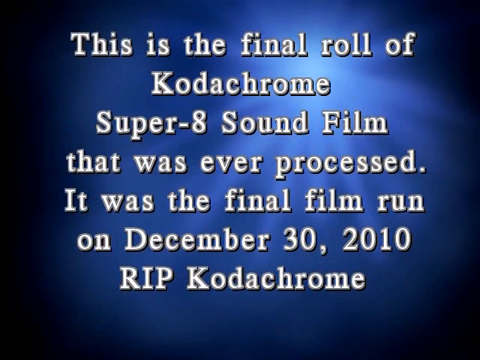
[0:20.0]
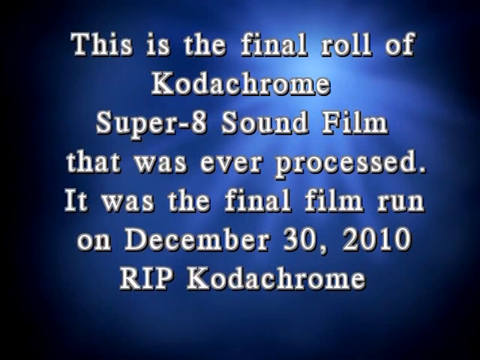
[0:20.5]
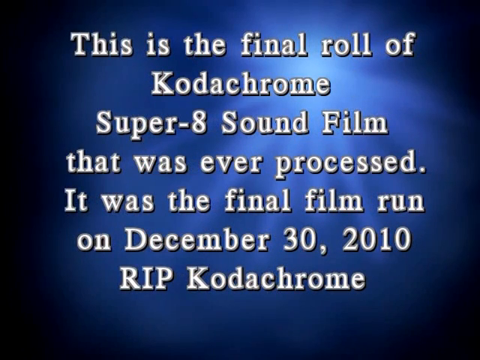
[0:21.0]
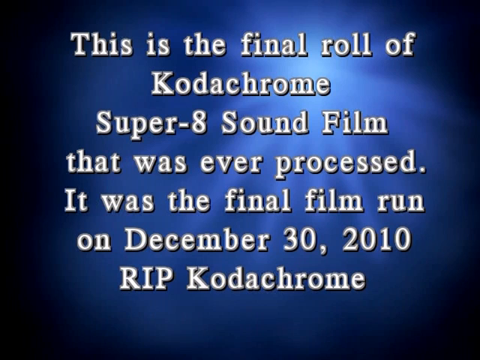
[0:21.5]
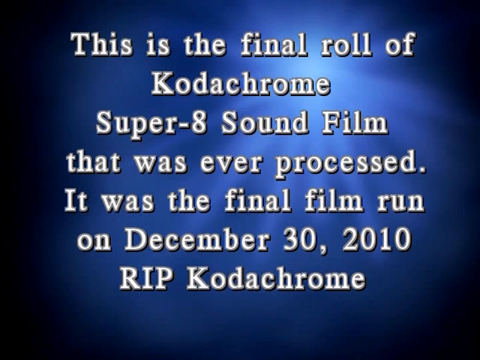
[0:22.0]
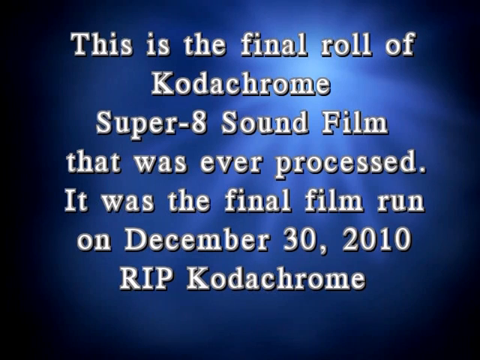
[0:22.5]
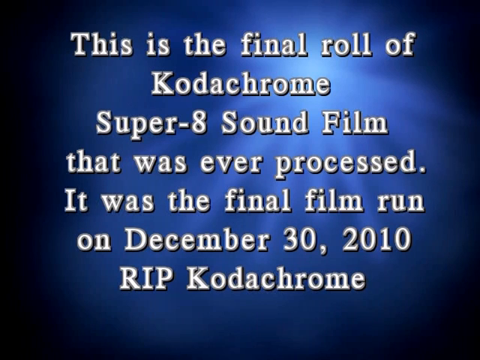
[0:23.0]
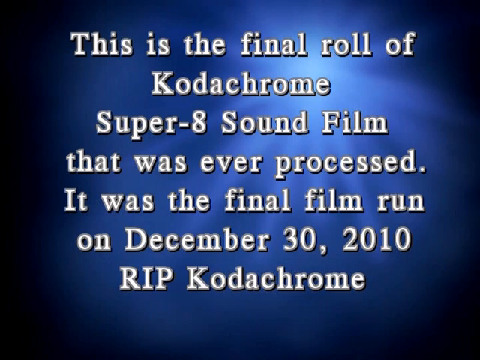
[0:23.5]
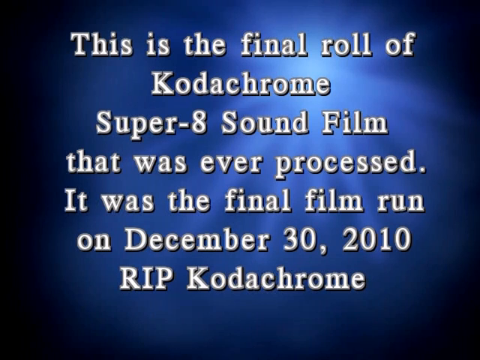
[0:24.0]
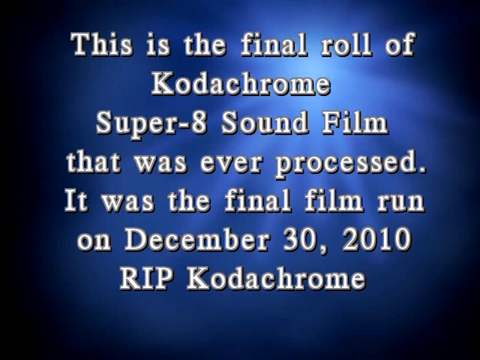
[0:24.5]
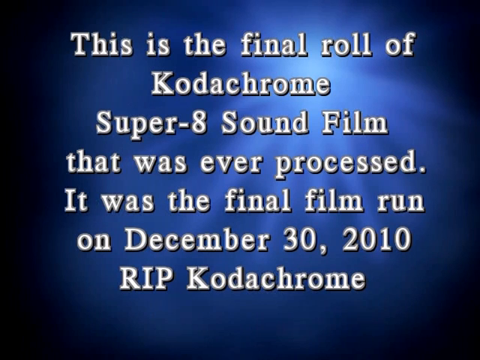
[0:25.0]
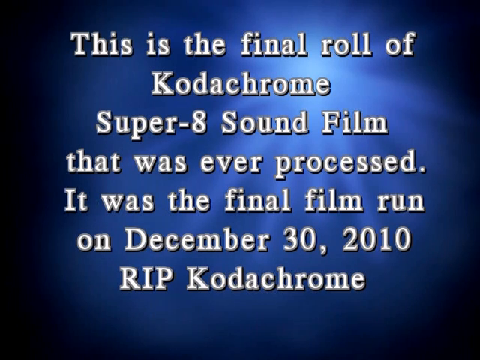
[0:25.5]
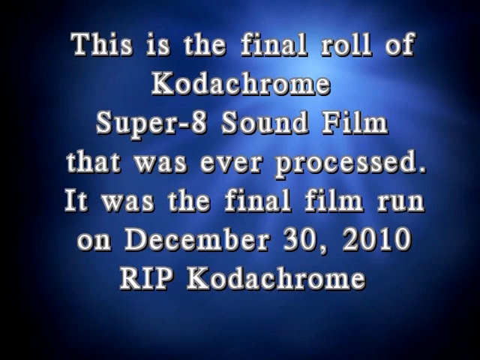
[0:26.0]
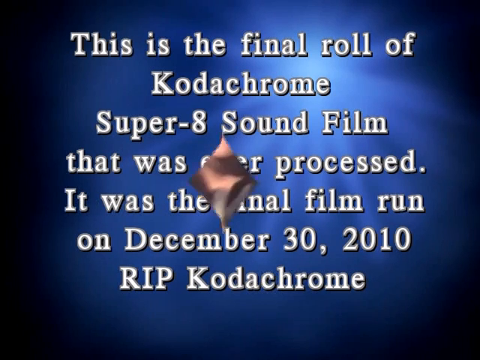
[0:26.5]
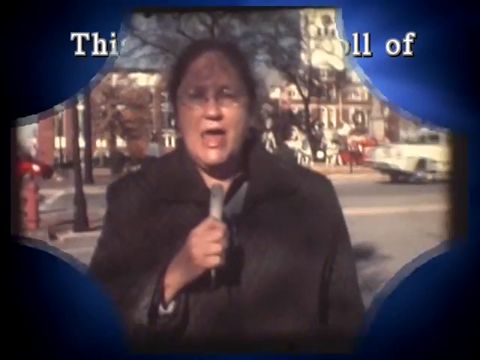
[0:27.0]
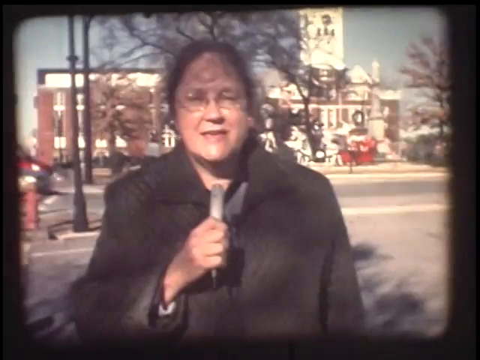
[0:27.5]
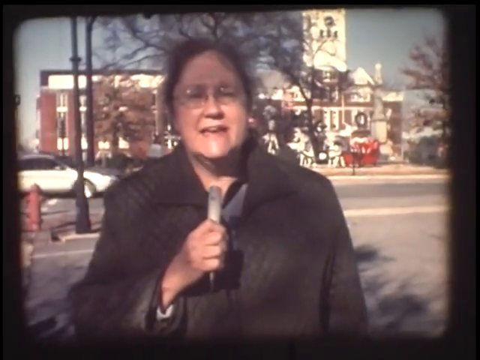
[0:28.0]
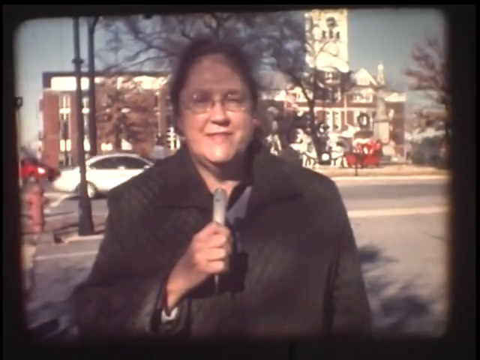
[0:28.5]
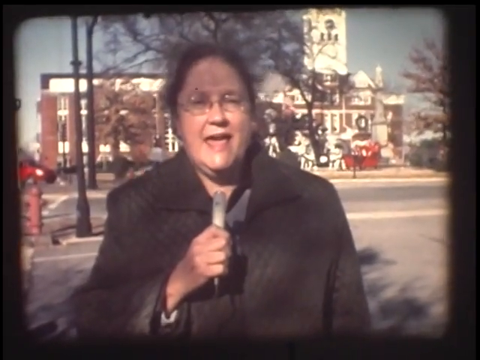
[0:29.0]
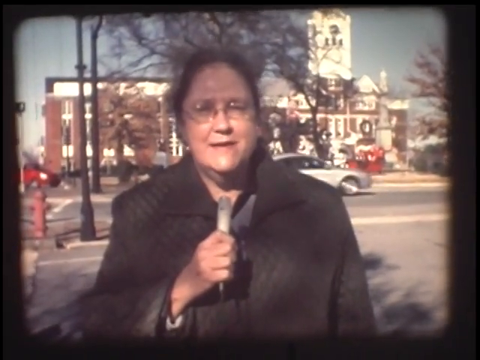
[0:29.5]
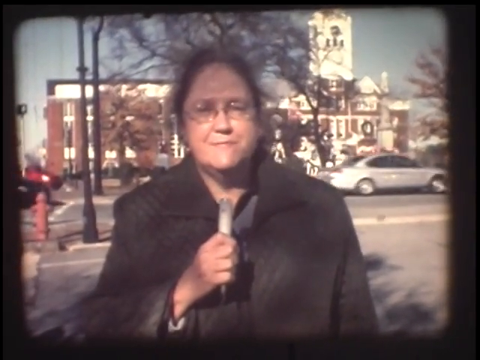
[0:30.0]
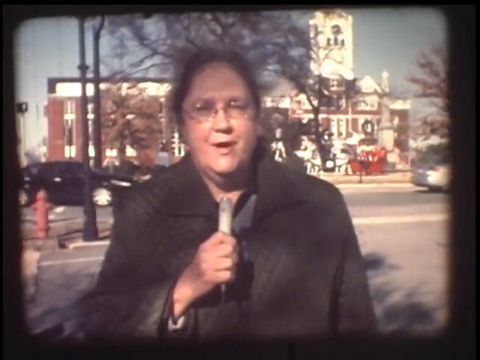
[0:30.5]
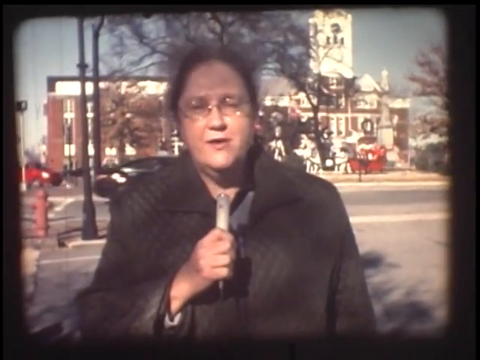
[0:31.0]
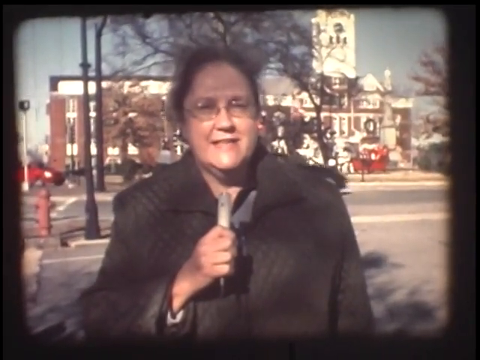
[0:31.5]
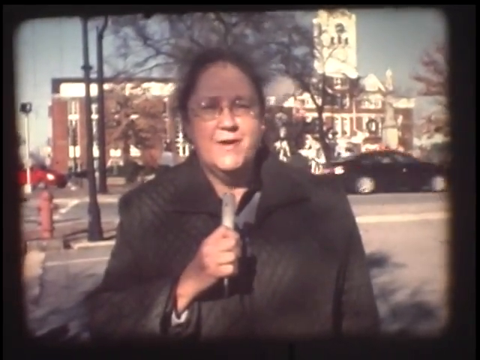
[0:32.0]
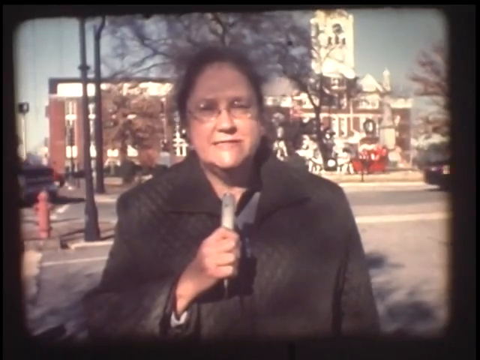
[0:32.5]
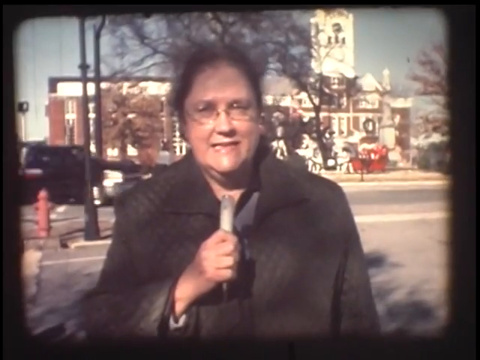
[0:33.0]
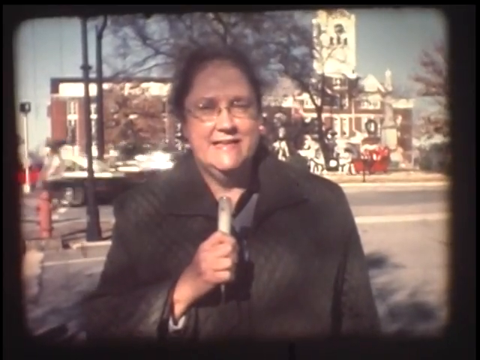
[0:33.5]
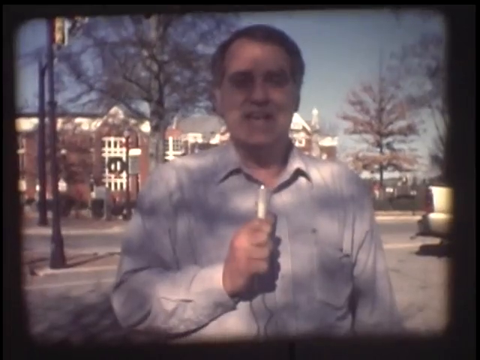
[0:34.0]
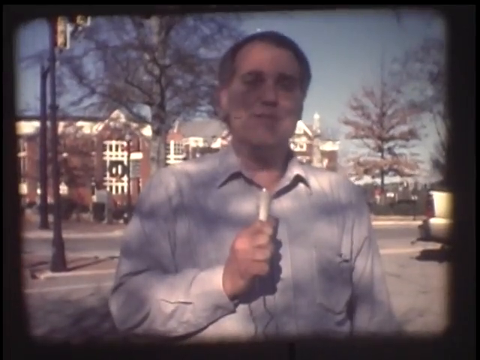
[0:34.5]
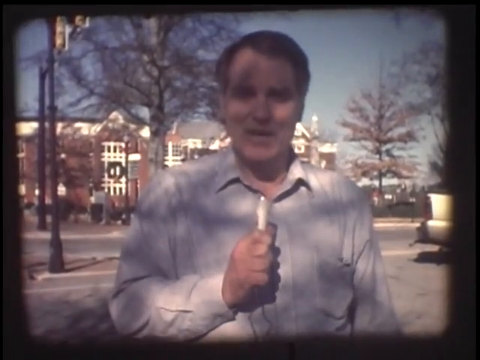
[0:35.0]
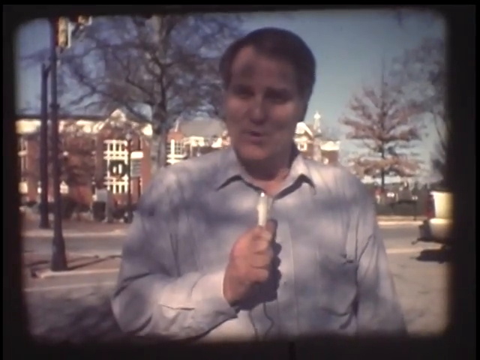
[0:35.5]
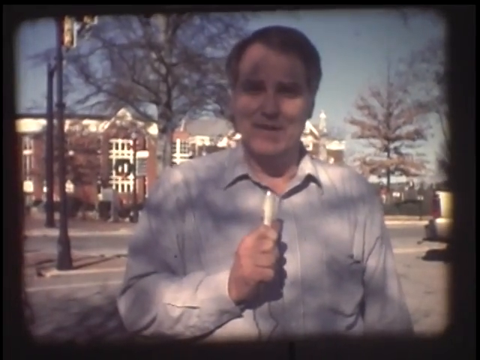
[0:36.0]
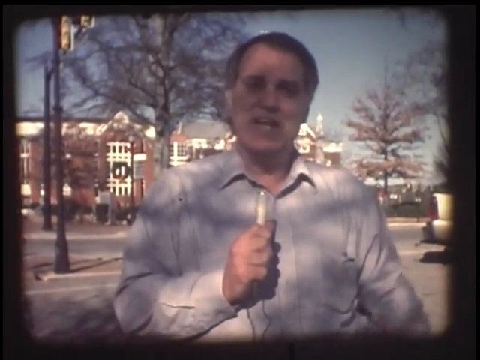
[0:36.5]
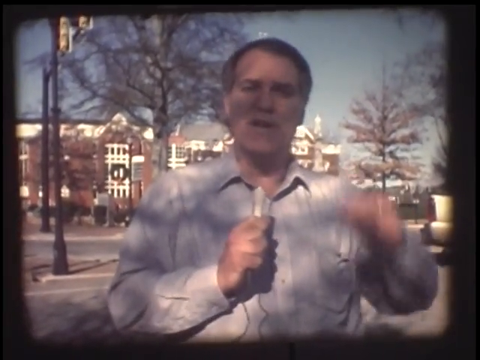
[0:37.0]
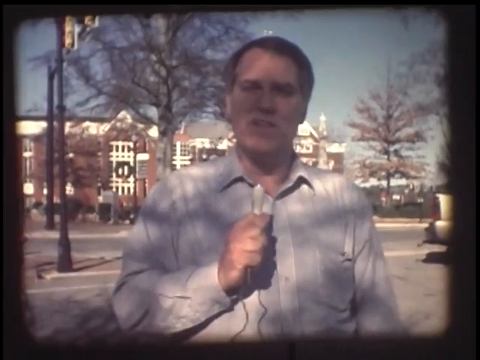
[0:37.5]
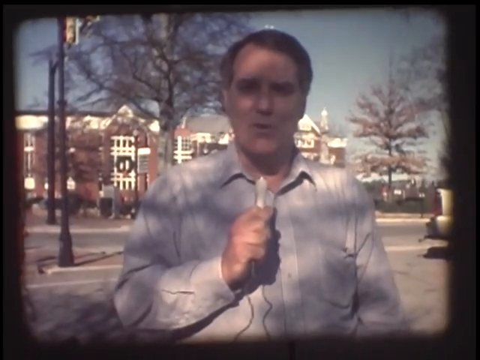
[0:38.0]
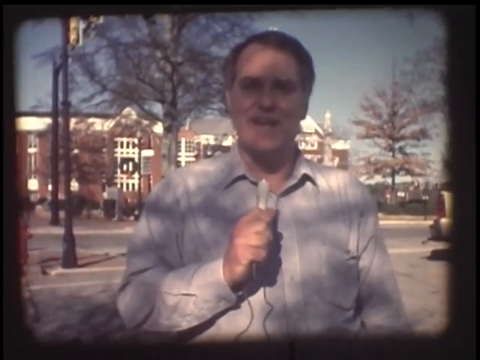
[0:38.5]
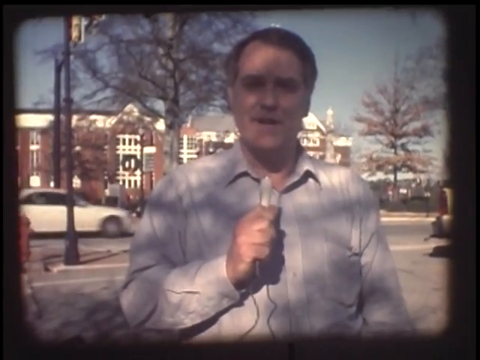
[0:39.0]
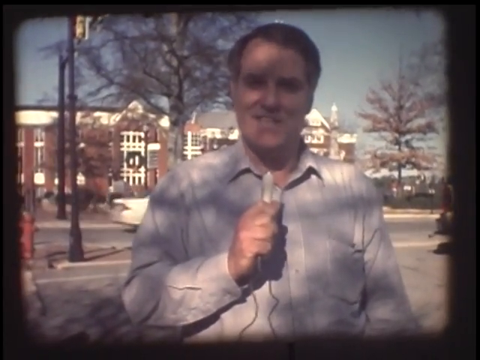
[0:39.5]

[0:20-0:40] The dark blue background continues, with a little light blue toward the top right, a black border down the left side and black corners on the right side. Seven lines of white text with a black border read: "This is the final roll of Kodachrome Super 8 sound film that was ever processed. It was the final film run on December 30, 2010, RIP Kodachrome." The screen then wipes from the inside going out to old, grainy-looking film with a little black border around the outside. A woman in a long black coat, with black hair and glasses, holds a microphone in her left hand about two inches below her chin, her other arm down at her side, and looks directly at the camera, talking. Behind her is a street, and beyond that a big brick building with a big white tower on top on its right side; there is one tree behind her and one on the right side. Her hair blows as a black car drives by, followed by a silver car driving in from the left going right, and then a black truck. The video cuts to a man with dark hair, clean shaven, in a really blurry image. He stands in front of the same building, which is a little over his left shoulder. He wears a light blue button-up shirt and holds a small white microphone in his left hand about two inches below his chin. As he talks, he raises his left hand up in the air and then puts it back down at his side as a car goes behind him.